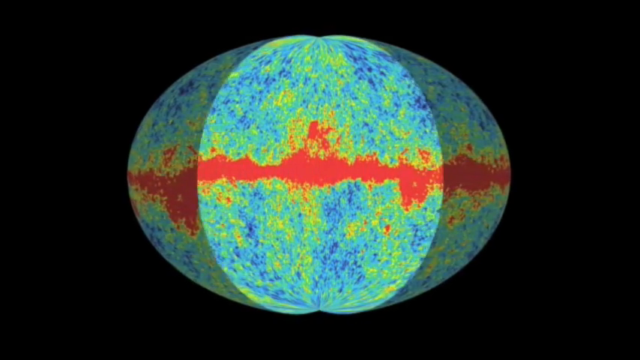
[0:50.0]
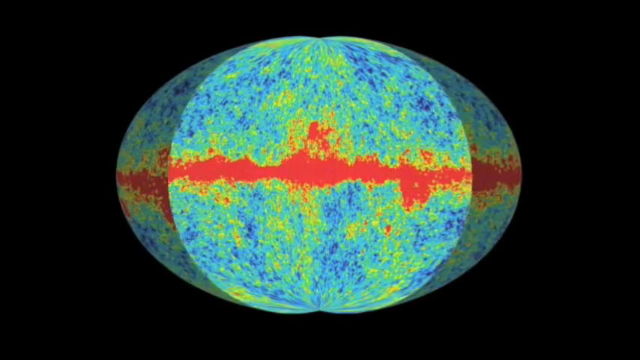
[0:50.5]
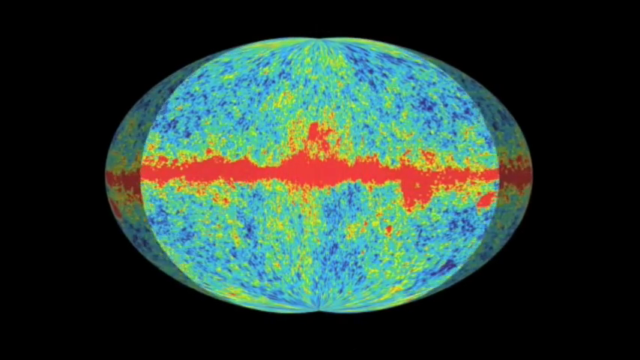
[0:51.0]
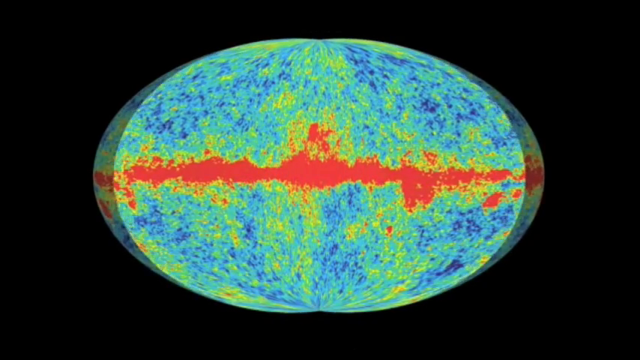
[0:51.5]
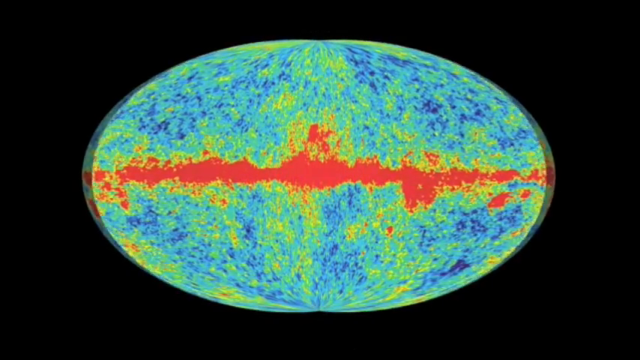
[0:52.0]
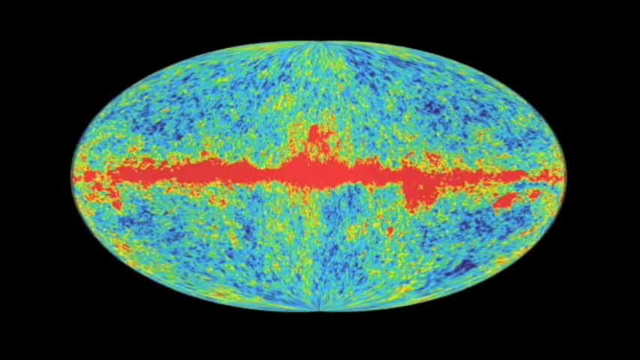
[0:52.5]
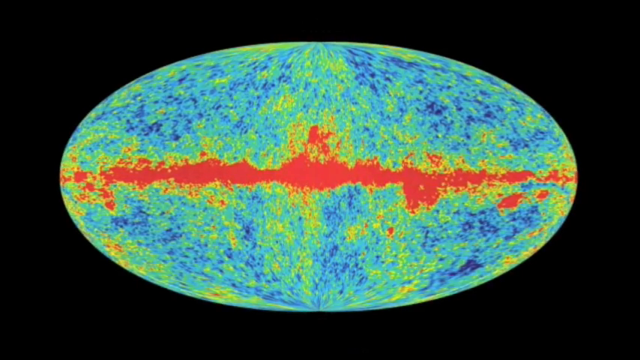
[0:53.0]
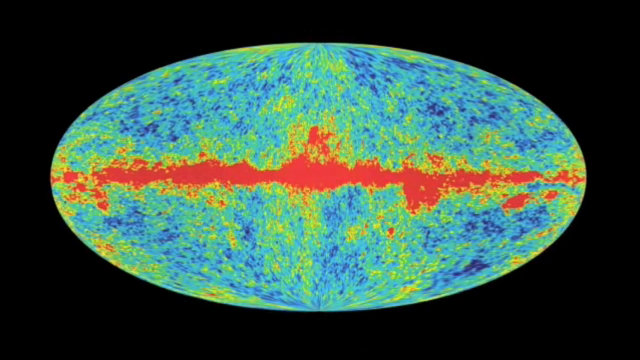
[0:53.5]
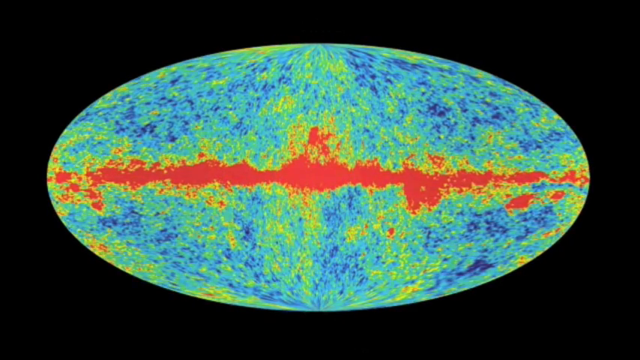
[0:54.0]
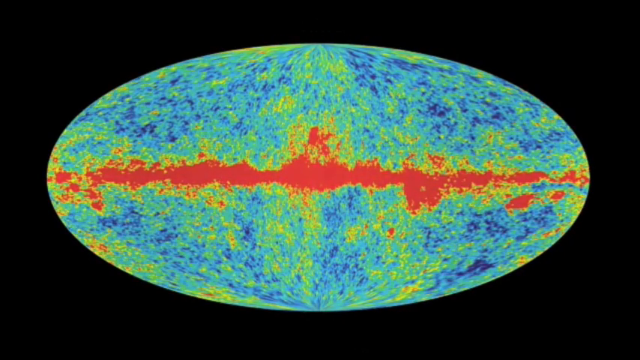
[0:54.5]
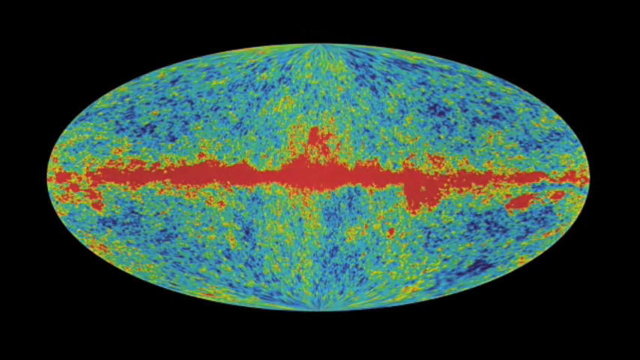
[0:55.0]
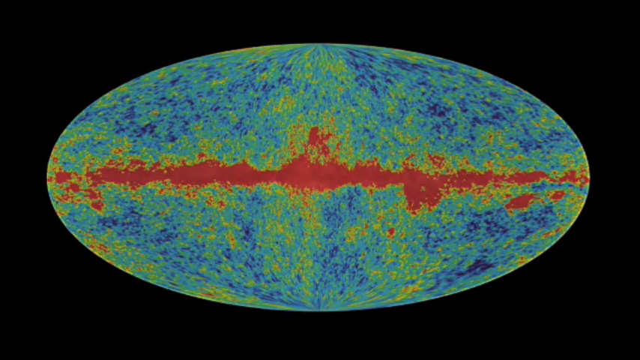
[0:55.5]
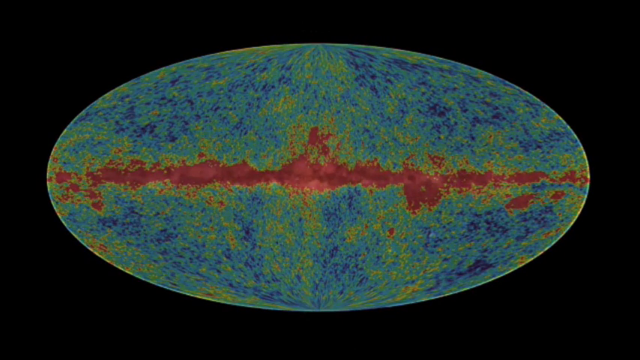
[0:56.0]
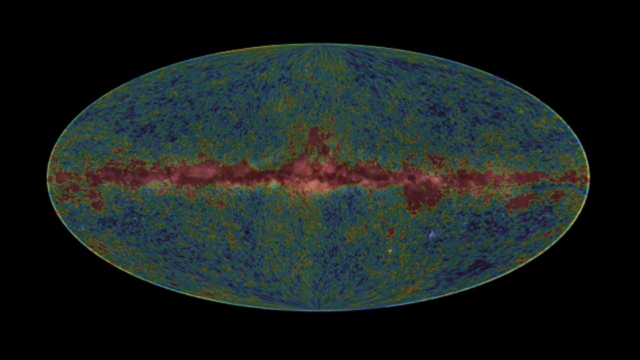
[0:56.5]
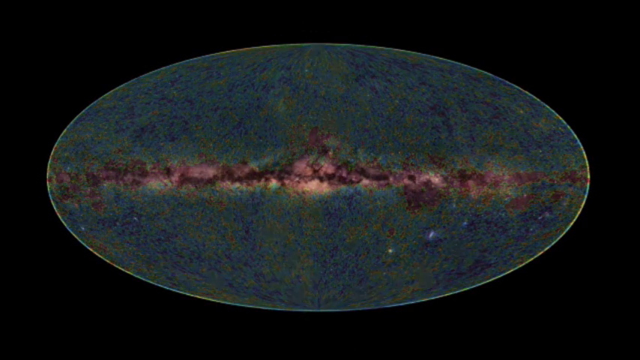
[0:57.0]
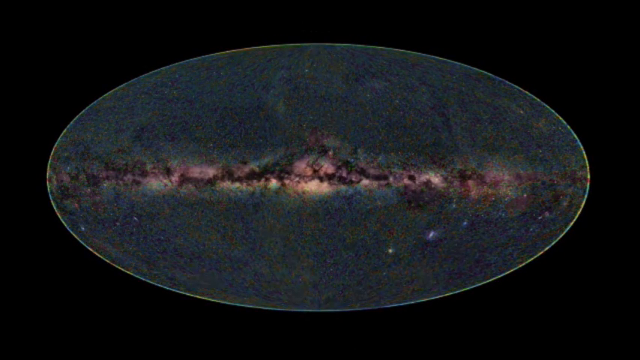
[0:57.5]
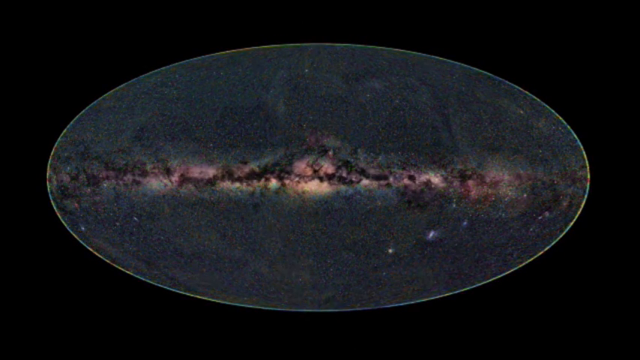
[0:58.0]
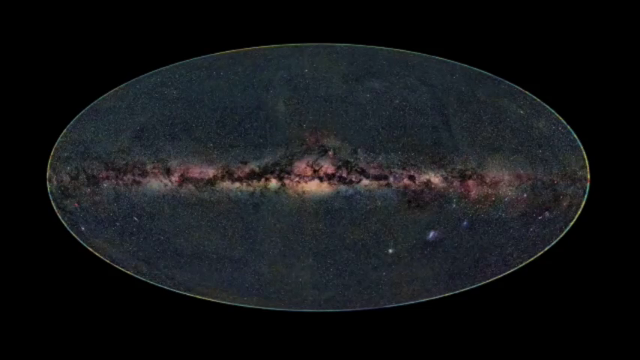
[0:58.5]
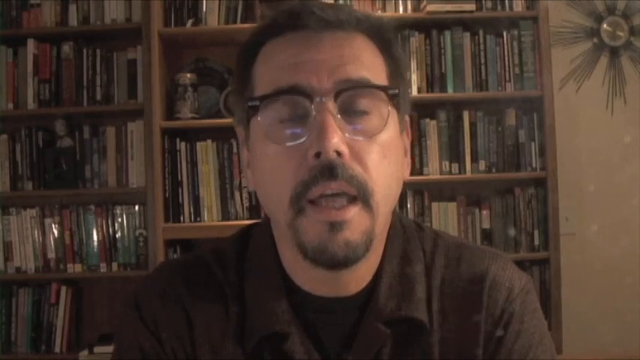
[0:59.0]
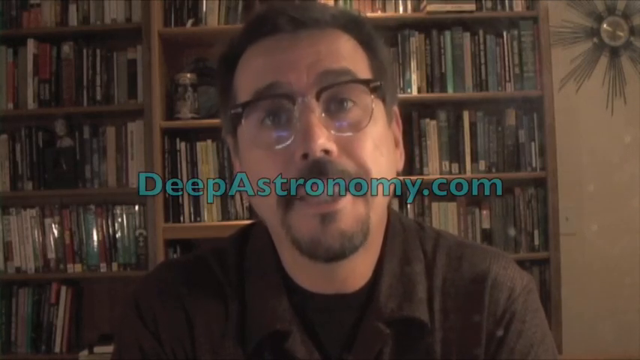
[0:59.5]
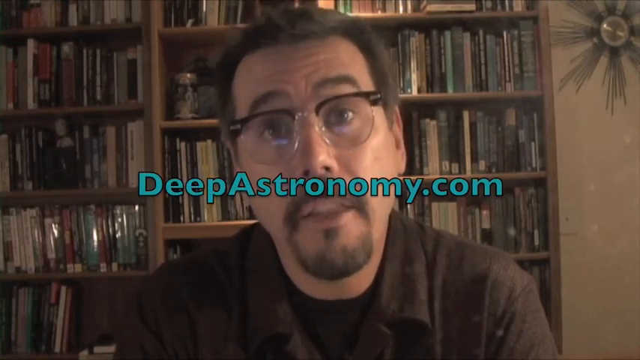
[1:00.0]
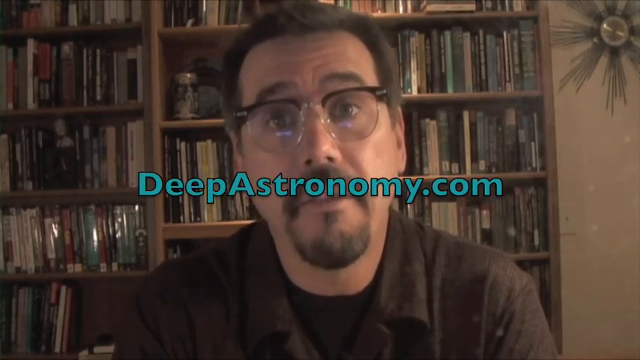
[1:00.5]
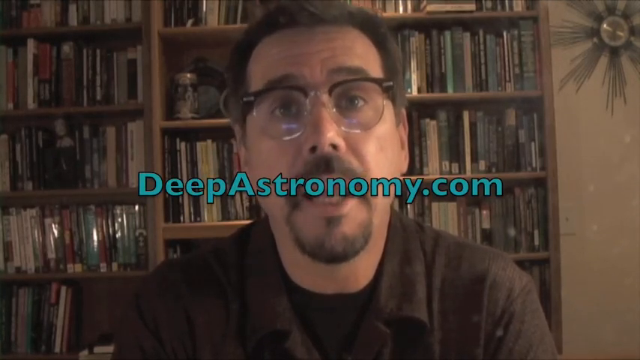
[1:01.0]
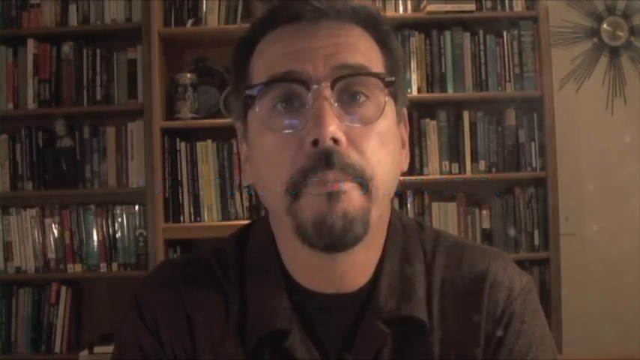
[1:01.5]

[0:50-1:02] The ball-shaped structure created by the rotating, spinning object is shown, with a point from which light emits. The light rotates in a circle, creating these kind of structures in space. The result almost looks like a ball, but it is hollow inside and begins expanding, possibly signifying the creation of the universe.